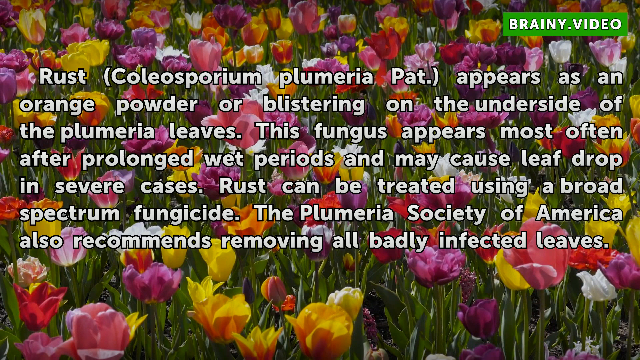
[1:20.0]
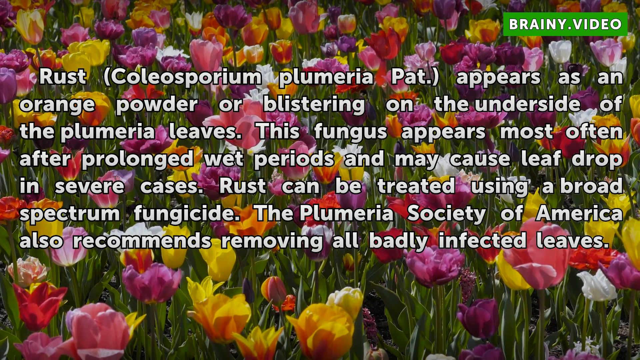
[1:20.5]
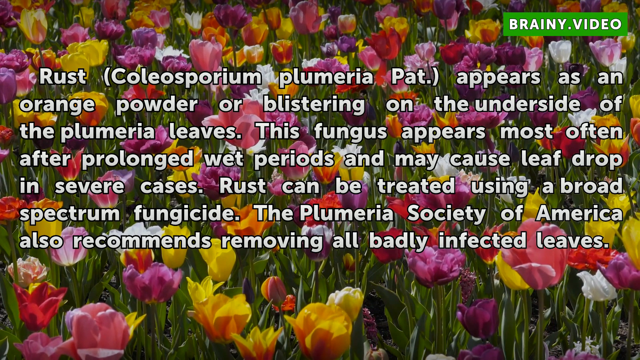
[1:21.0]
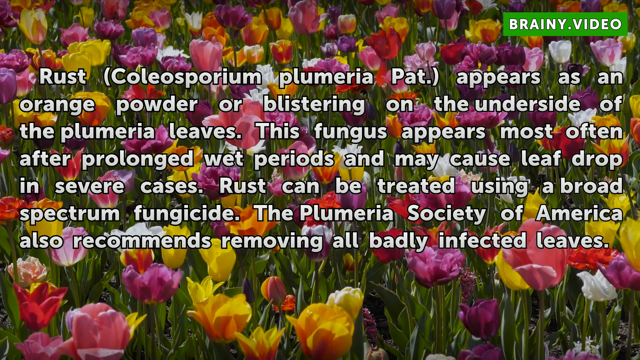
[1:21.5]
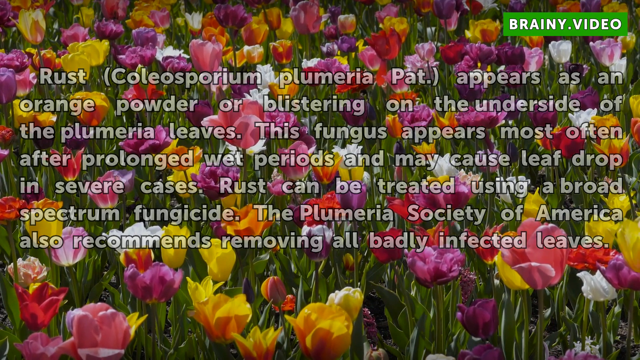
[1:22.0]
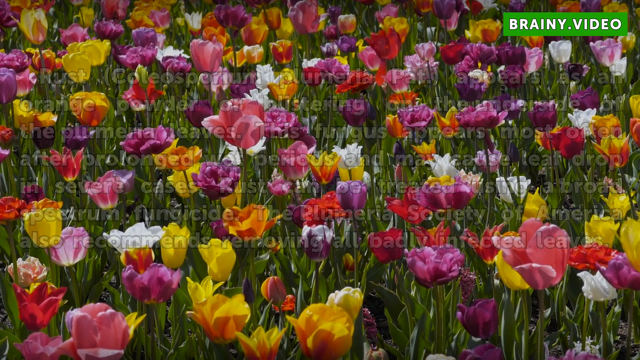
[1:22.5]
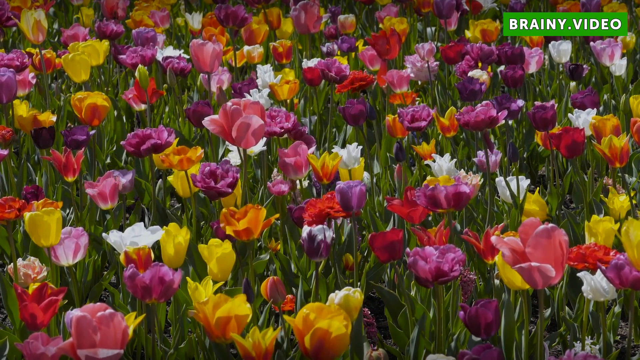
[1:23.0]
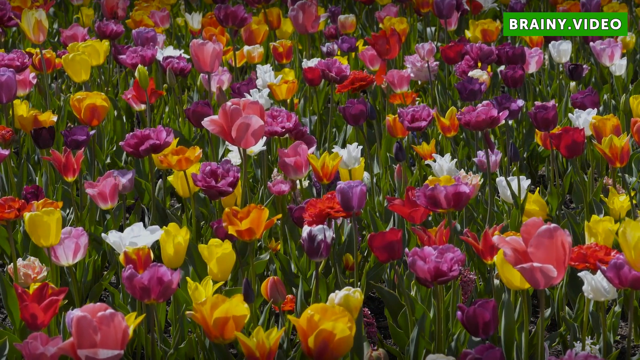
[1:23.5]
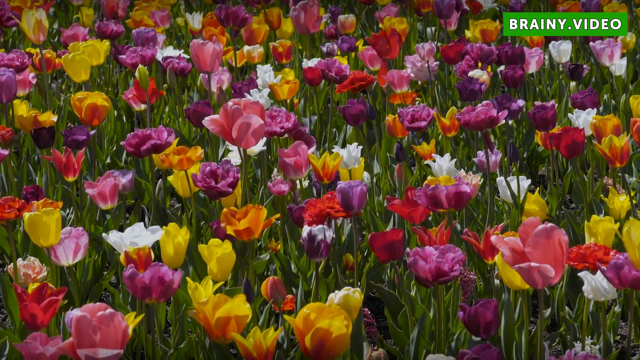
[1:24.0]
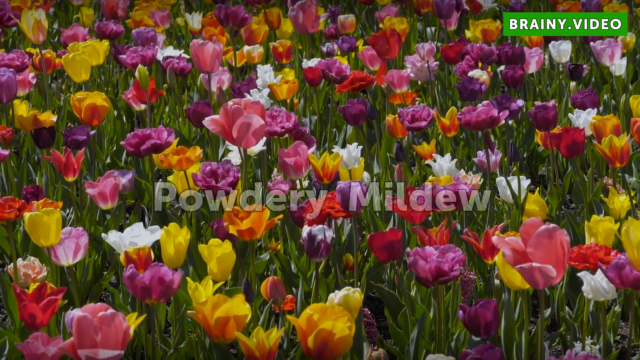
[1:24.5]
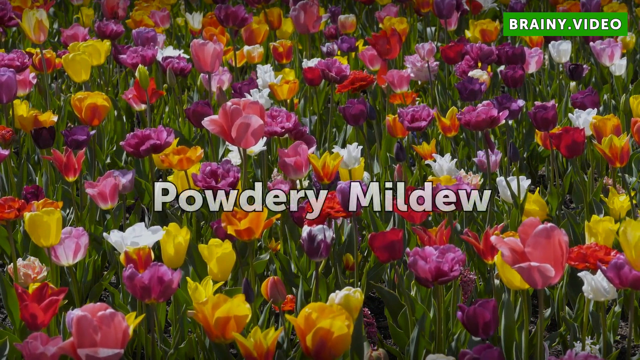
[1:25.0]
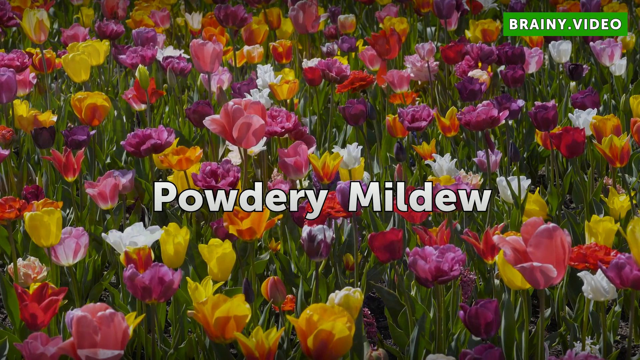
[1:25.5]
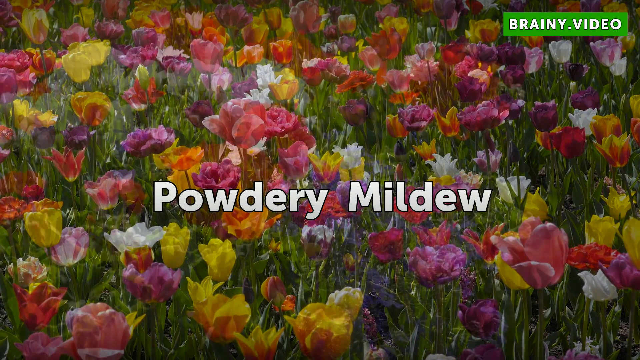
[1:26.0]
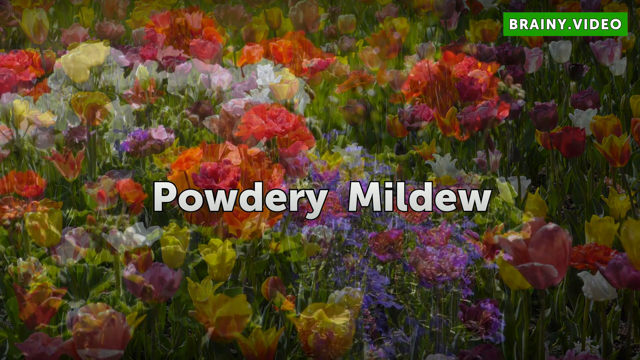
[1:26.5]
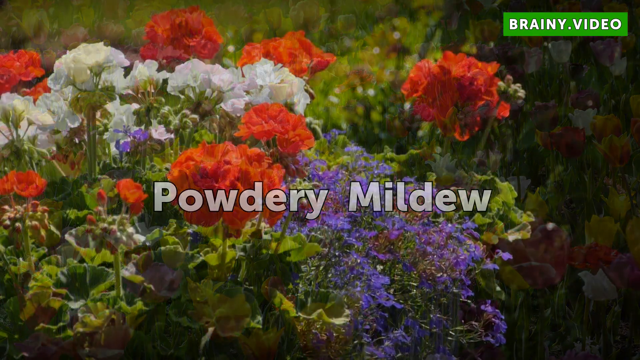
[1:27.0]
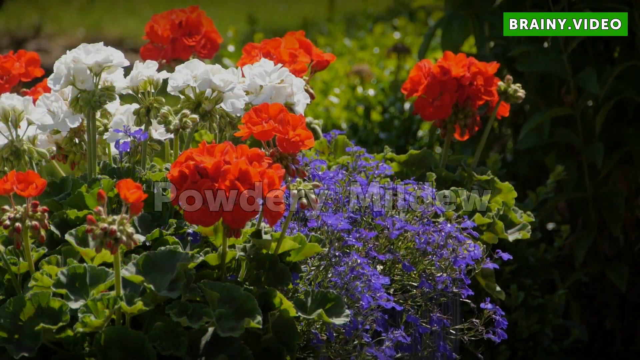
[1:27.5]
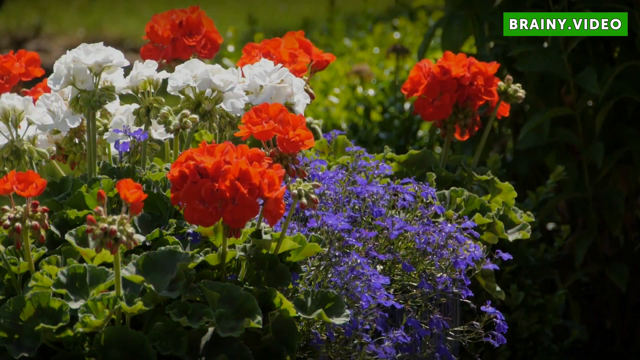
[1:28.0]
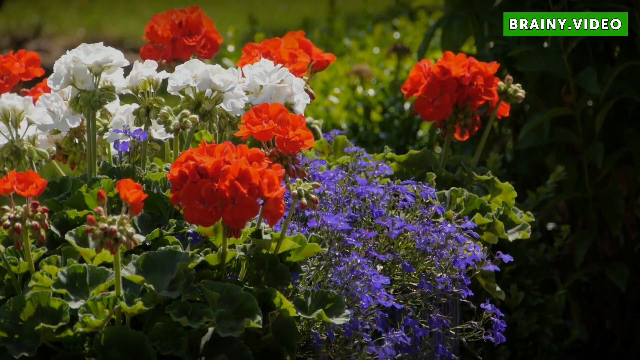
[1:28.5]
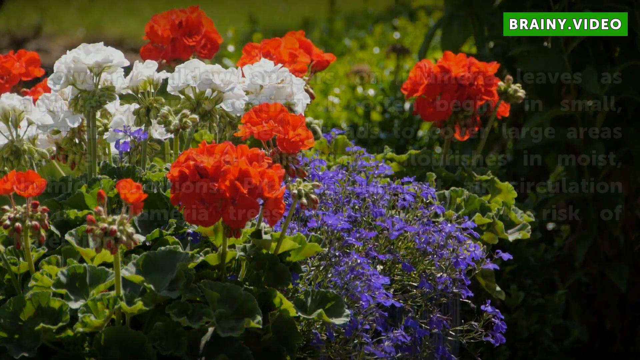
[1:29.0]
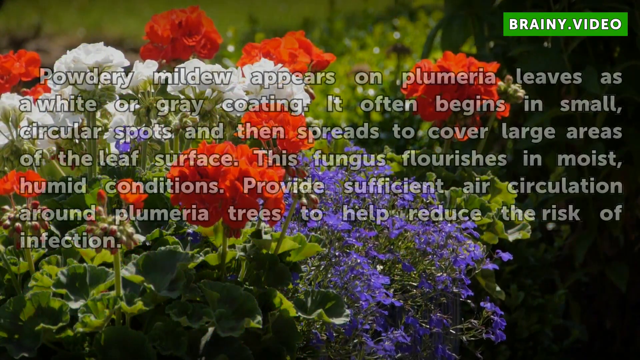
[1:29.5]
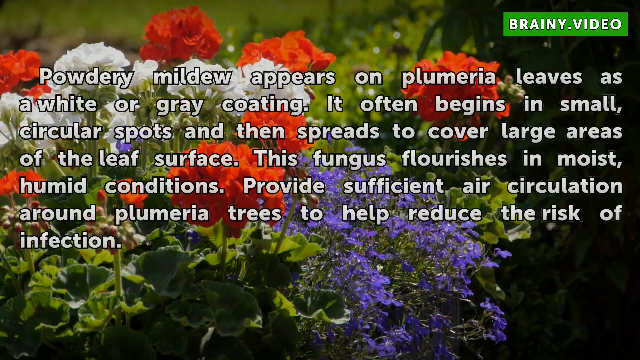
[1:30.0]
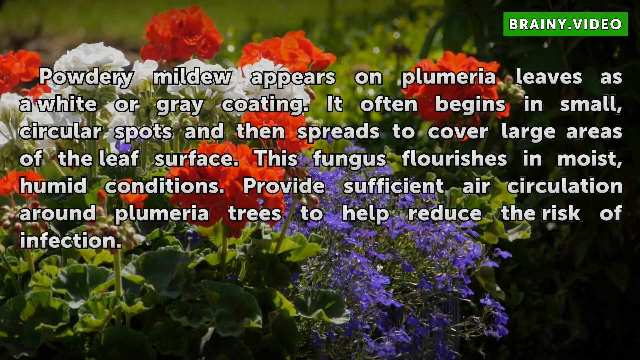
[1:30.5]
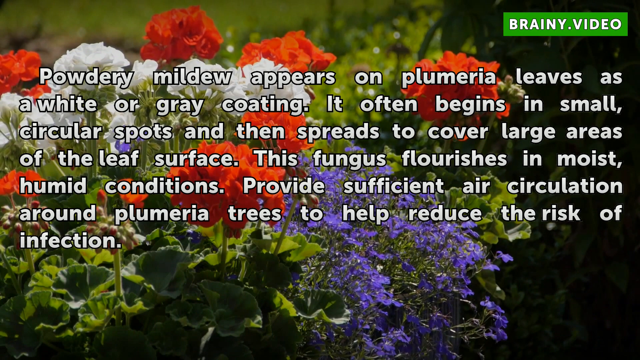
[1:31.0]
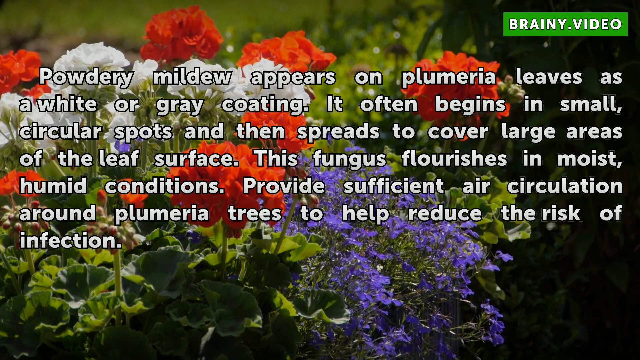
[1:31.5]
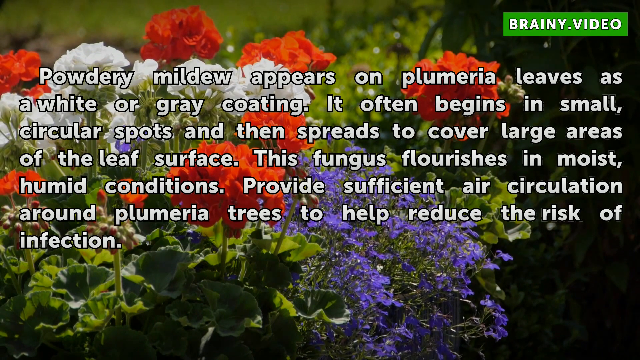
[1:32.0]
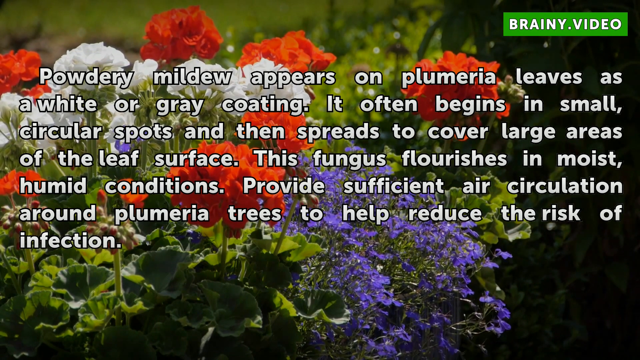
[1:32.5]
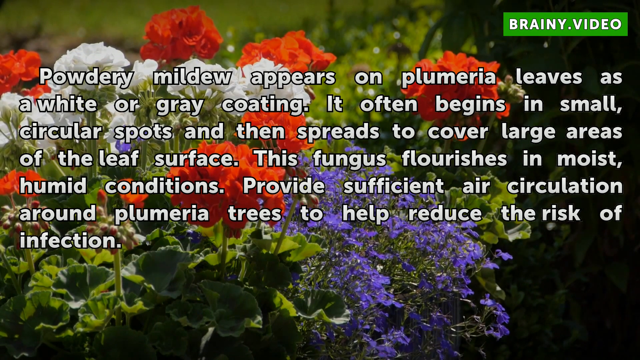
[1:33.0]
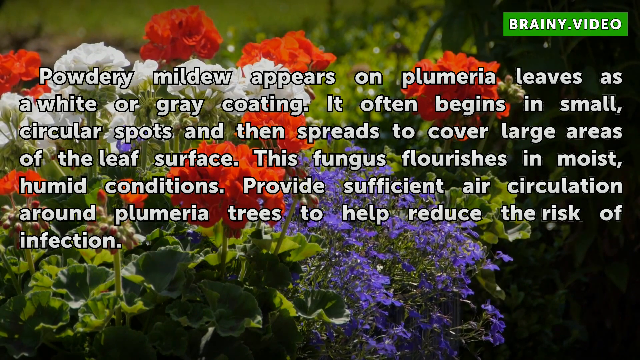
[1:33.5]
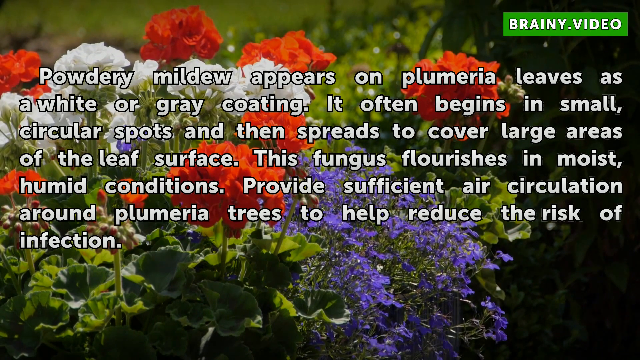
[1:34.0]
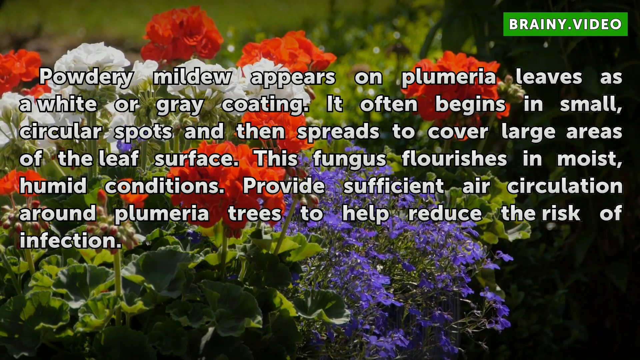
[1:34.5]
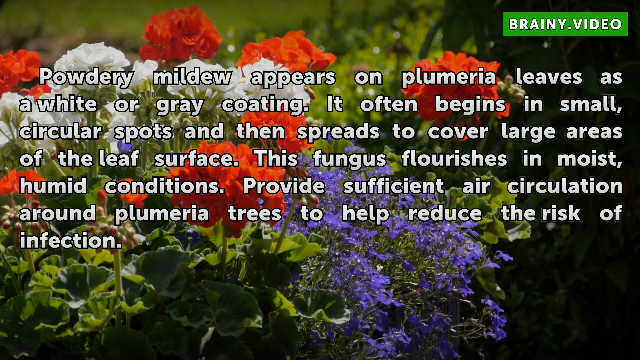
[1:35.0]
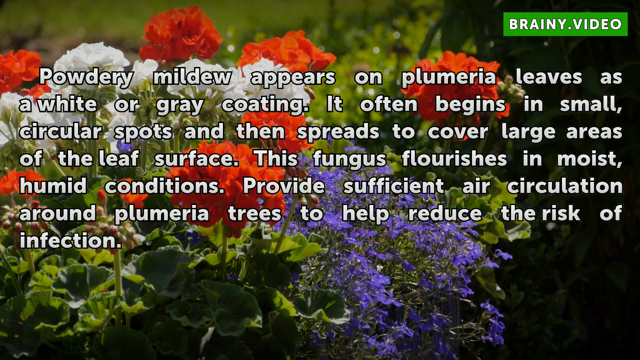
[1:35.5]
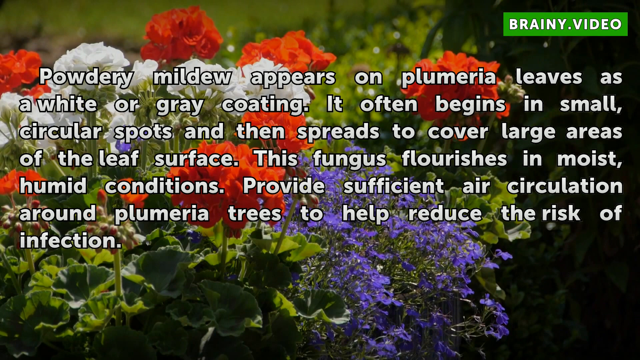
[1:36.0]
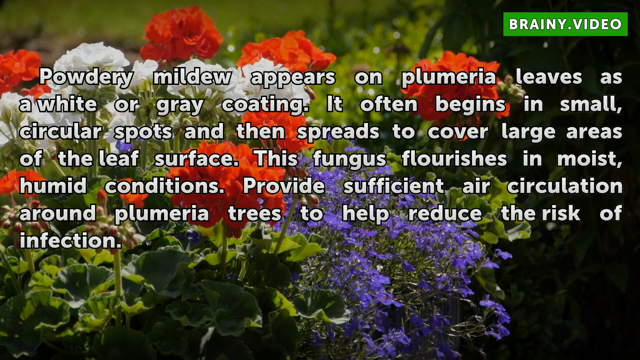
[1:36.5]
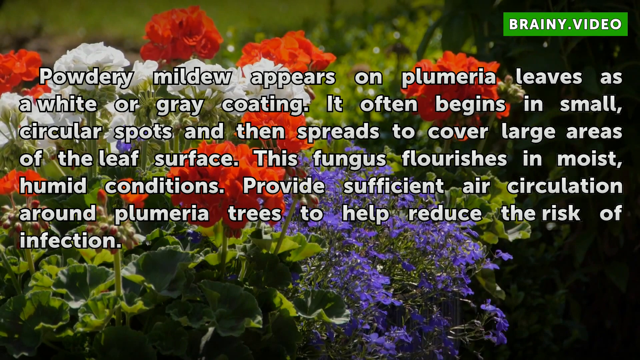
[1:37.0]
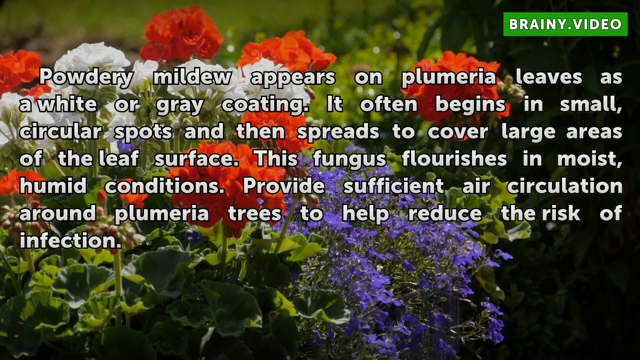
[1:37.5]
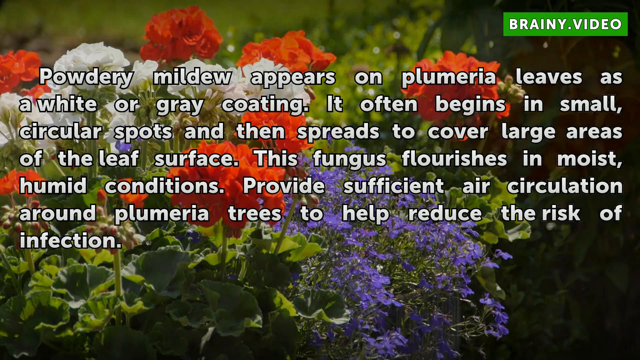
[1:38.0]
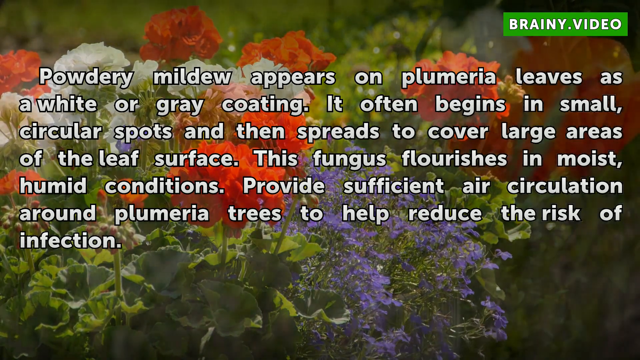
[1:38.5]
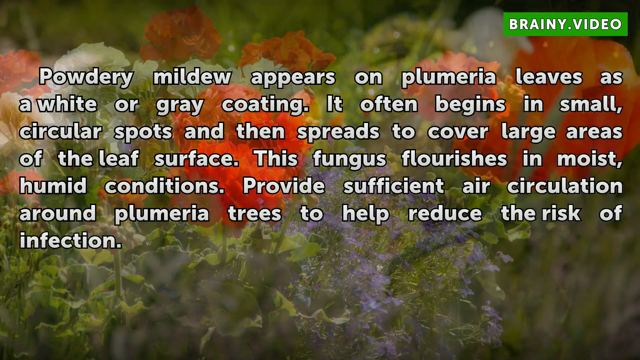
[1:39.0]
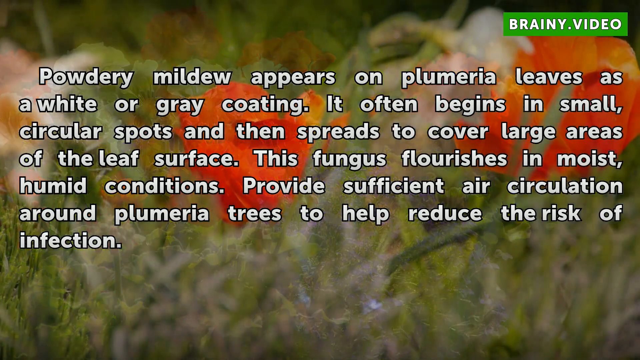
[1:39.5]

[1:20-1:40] After rust, the video moves on to powdery mildew, which appears on plumeria leaves as a white or gray coating. It often begins in small circular spots and then spreads to cover large areas of the leaf surface. This fungus flourishes in moist, humid conditions, and providing sufficient air circulation around plumeria trees helps reduce the risk of infection.